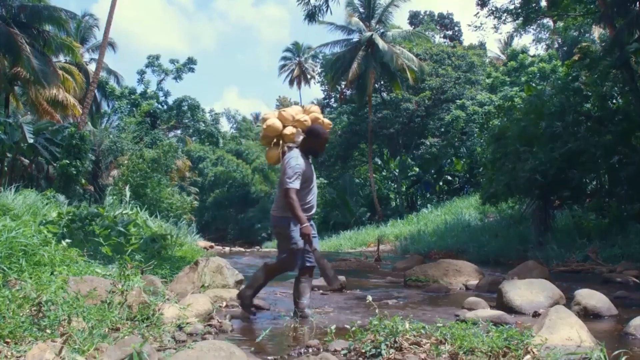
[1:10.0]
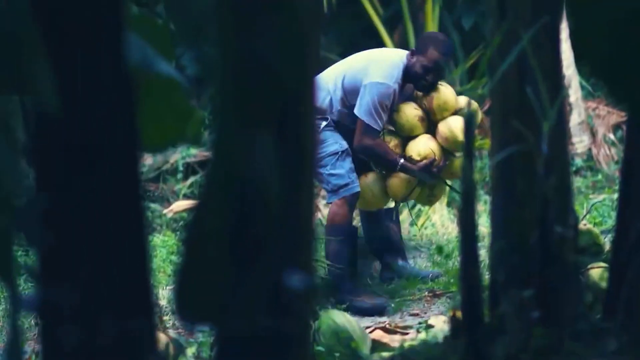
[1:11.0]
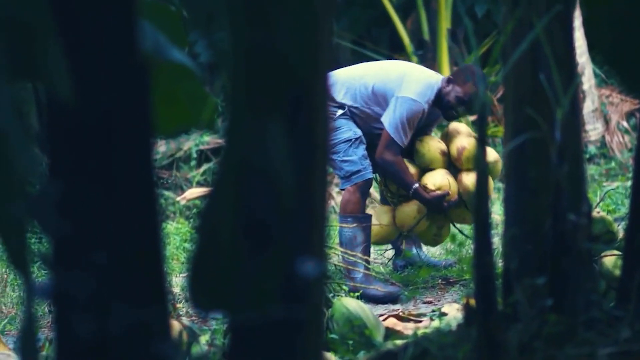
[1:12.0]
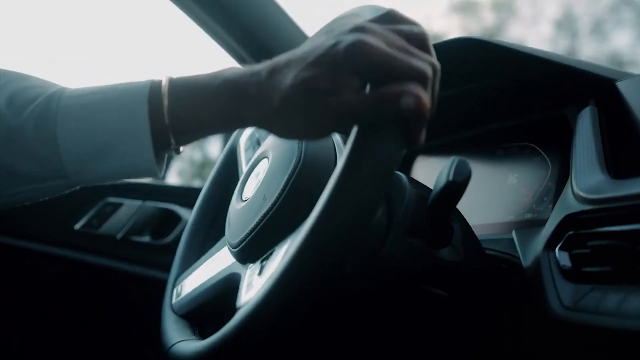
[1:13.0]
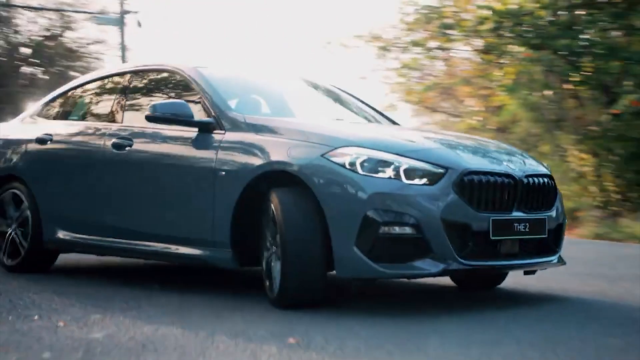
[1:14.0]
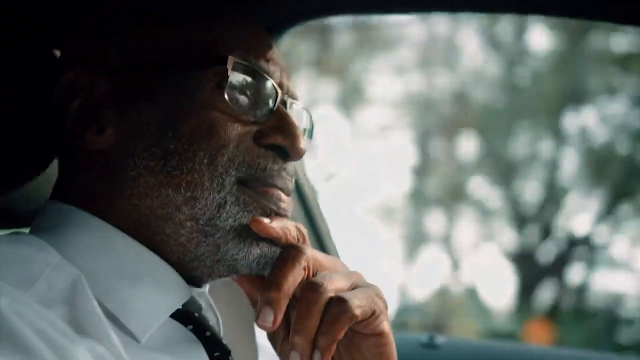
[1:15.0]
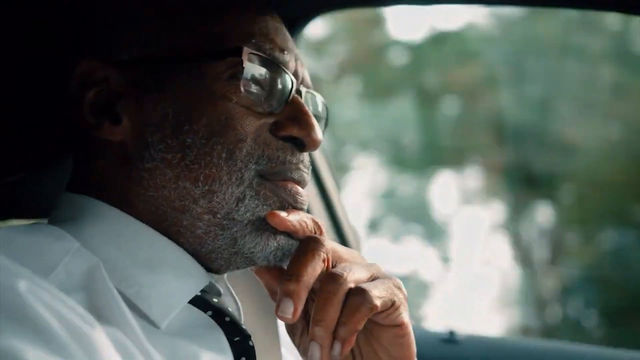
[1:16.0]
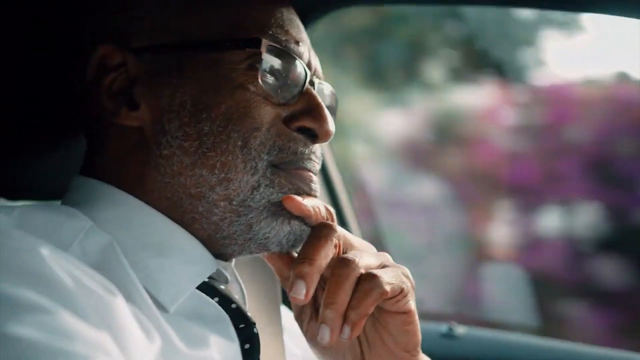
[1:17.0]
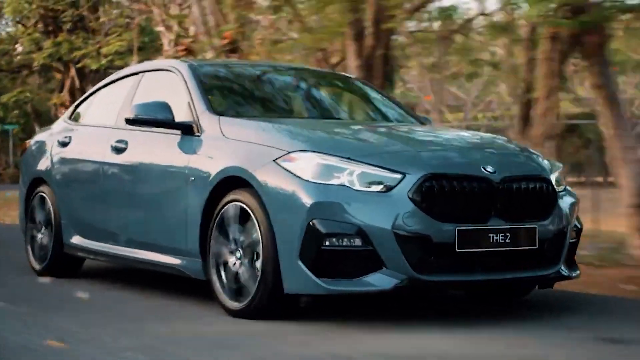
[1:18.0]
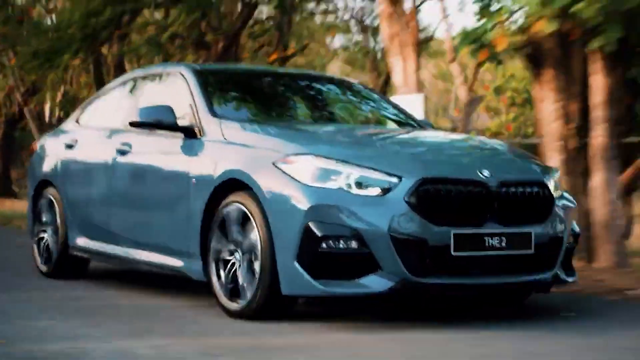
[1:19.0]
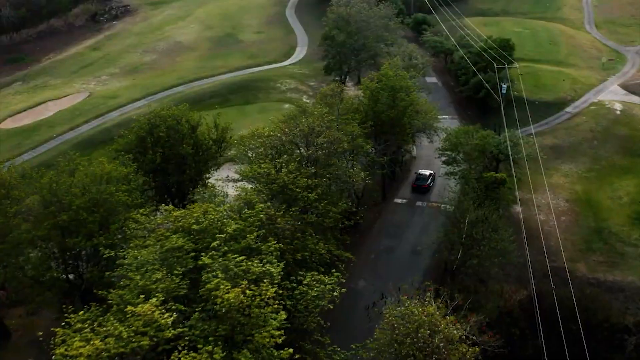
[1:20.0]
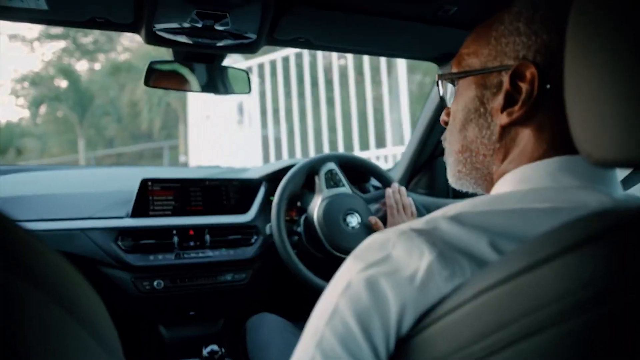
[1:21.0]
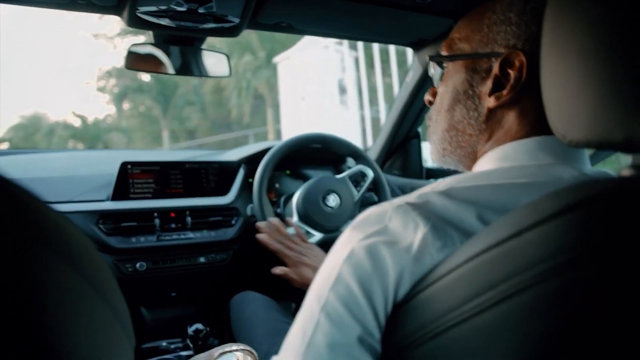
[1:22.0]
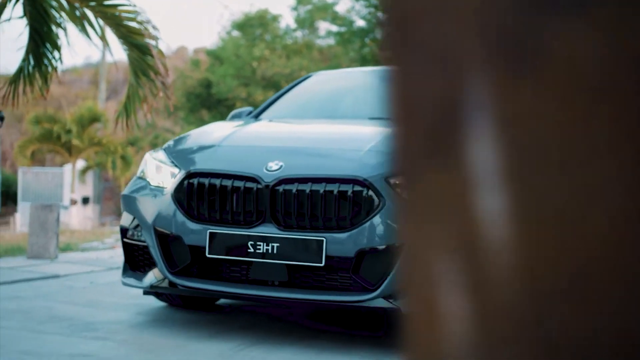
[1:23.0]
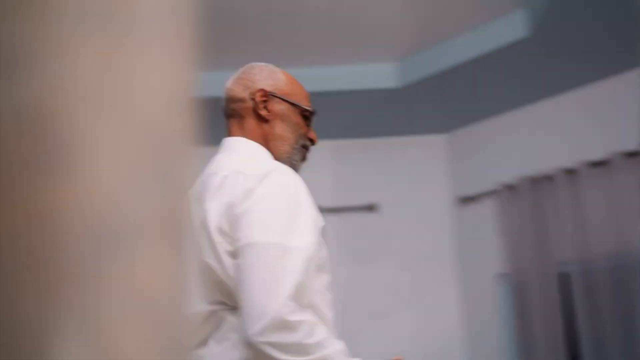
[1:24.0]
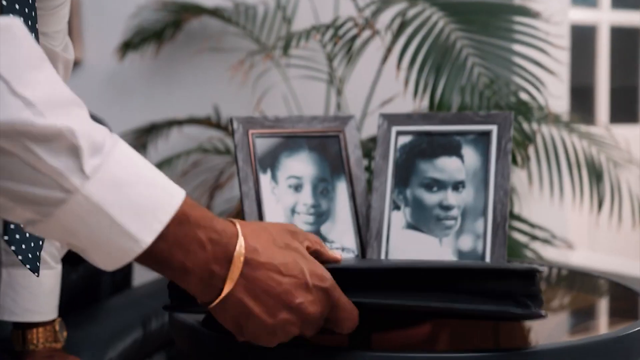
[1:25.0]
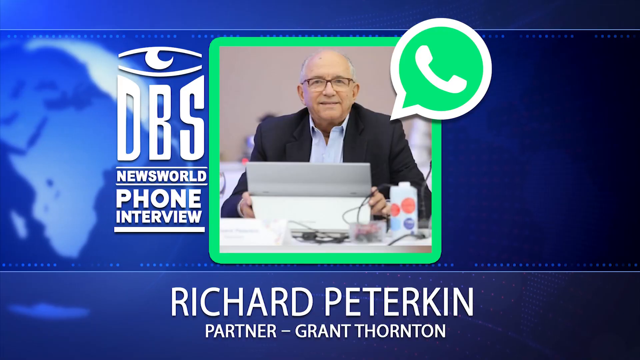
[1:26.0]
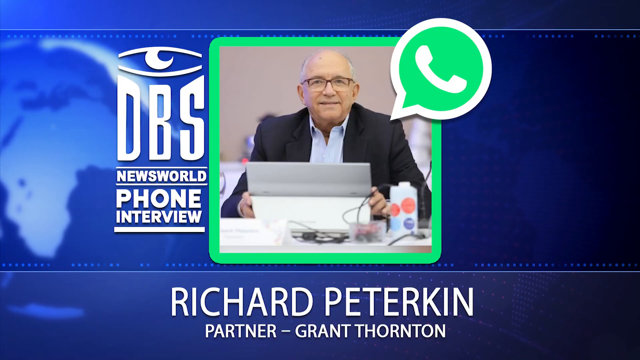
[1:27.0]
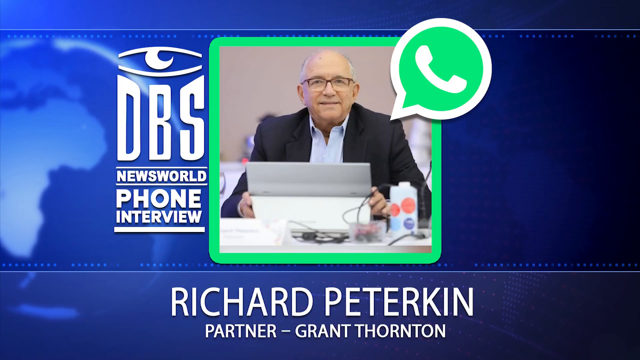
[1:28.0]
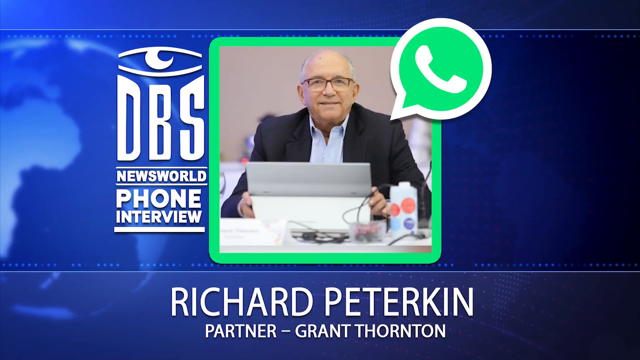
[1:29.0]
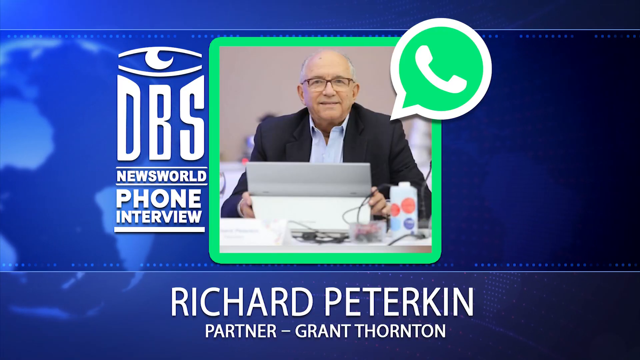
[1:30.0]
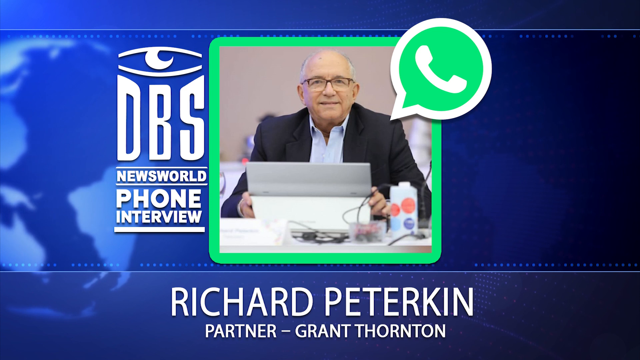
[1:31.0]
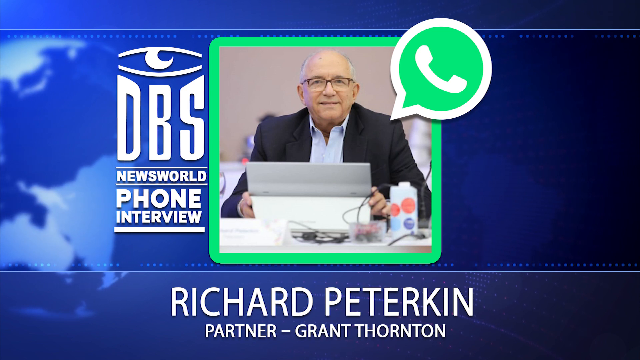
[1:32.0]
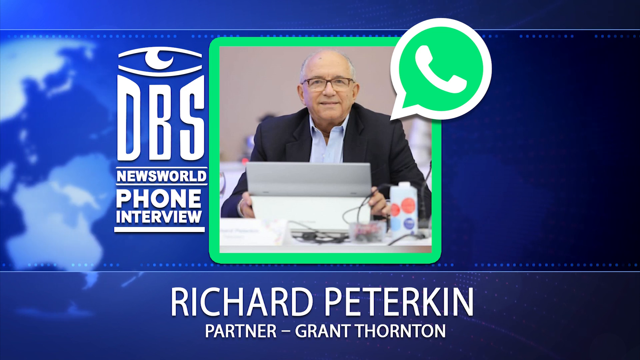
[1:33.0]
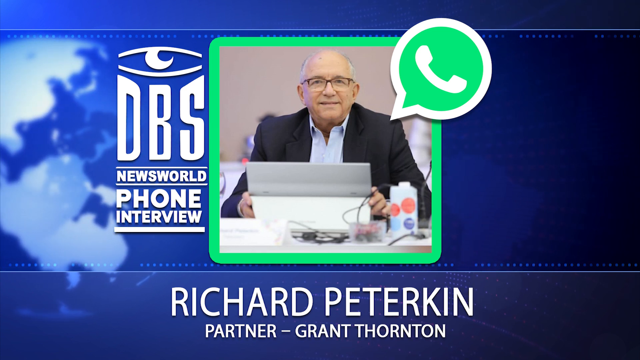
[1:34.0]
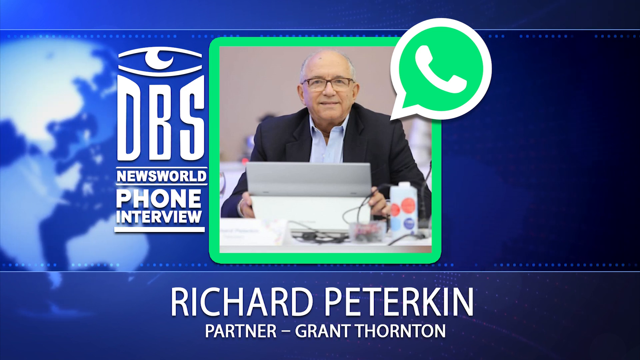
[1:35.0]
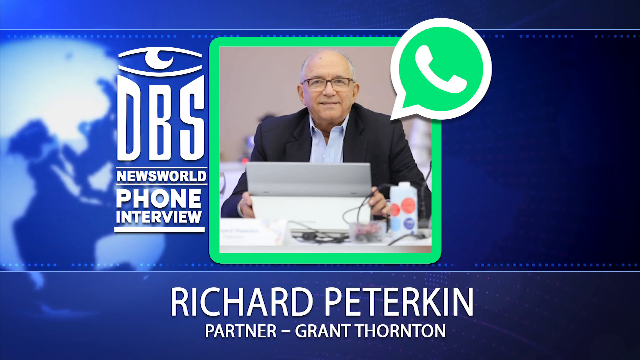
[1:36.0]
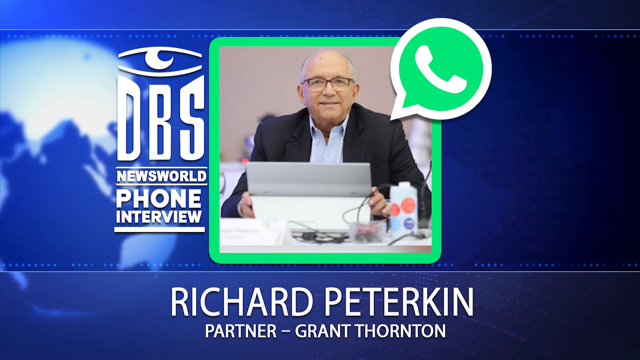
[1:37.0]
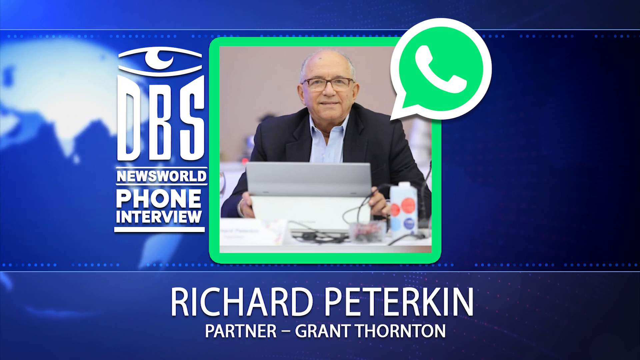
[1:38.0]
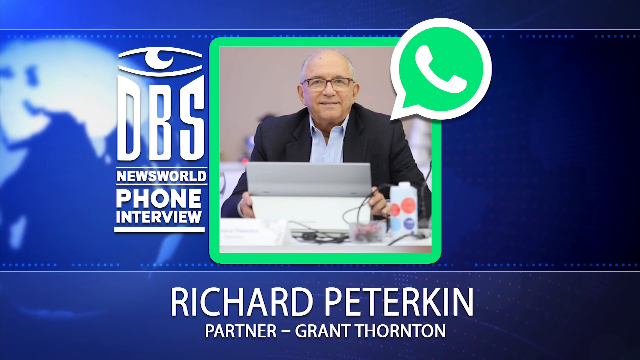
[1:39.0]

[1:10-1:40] A man works to get large fruits of an unidentified kind. The man with the gray BMW is then shown driving along a road with a lot of green land on the left and right sides; the left side possibly looks like a golf course. He is then shown at home, where there are two black-and-white pictures, possibly of his mother or a sibling. A blue background screen appears with part of the globe on the left side and white text reading "DPS News World, phone interview". A white man with glasses and a dark-colored suit is holding a Chromebook or some type of thin laptop, with white text reading "Richard PETERKIN, partner Grant Thornton".